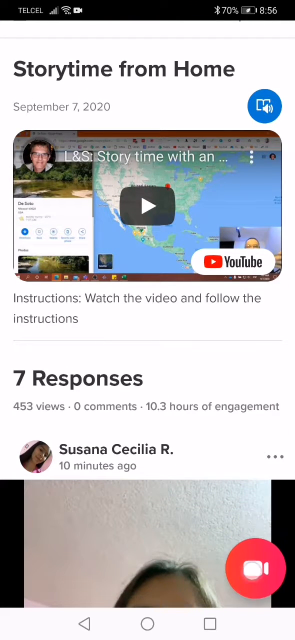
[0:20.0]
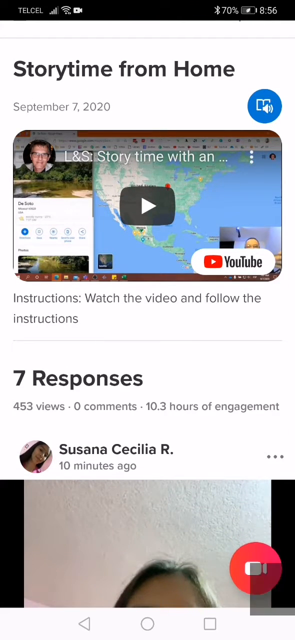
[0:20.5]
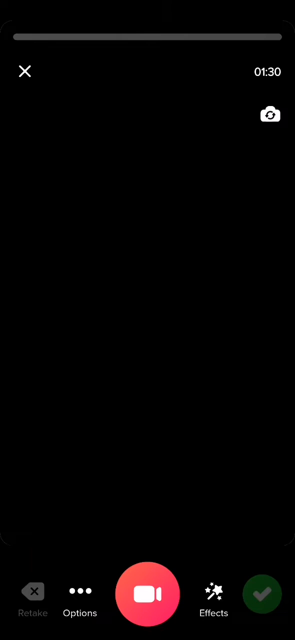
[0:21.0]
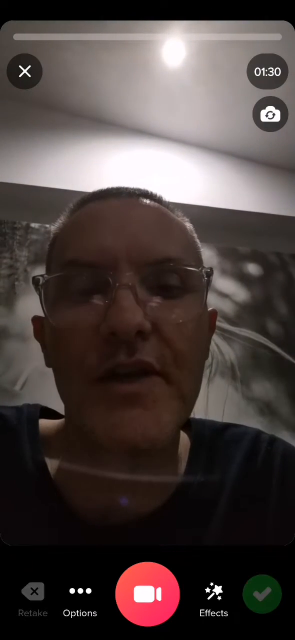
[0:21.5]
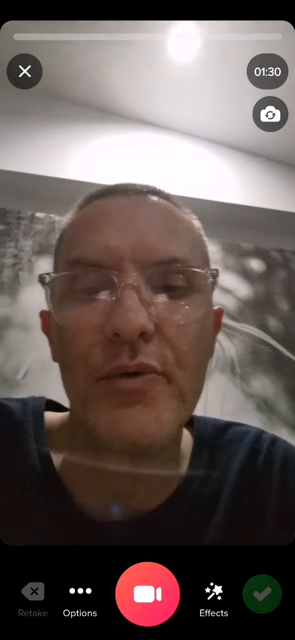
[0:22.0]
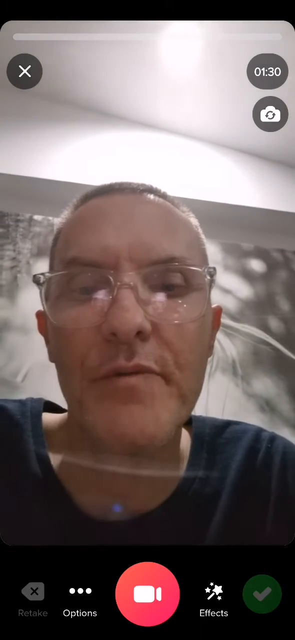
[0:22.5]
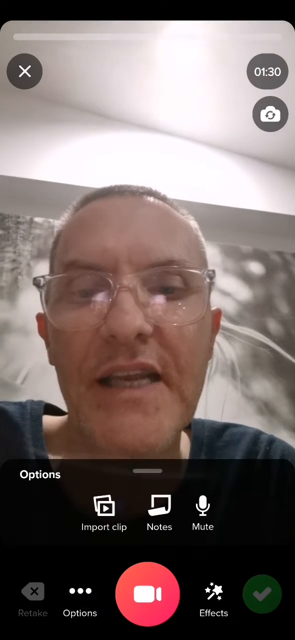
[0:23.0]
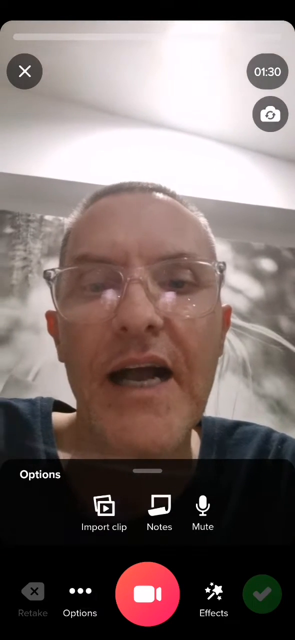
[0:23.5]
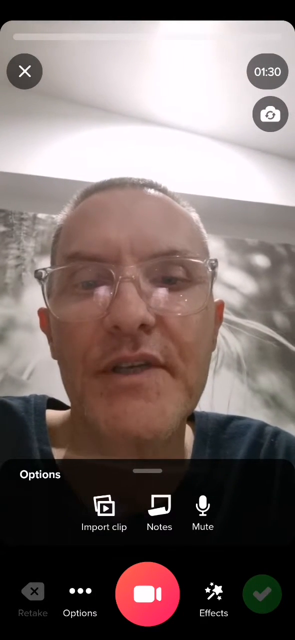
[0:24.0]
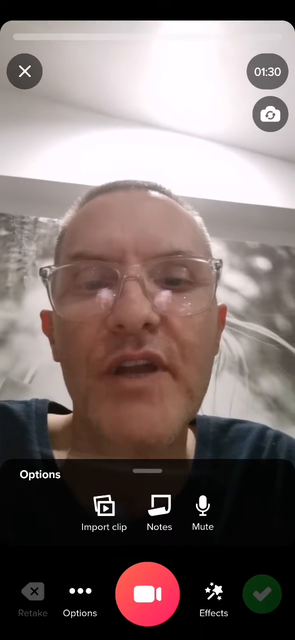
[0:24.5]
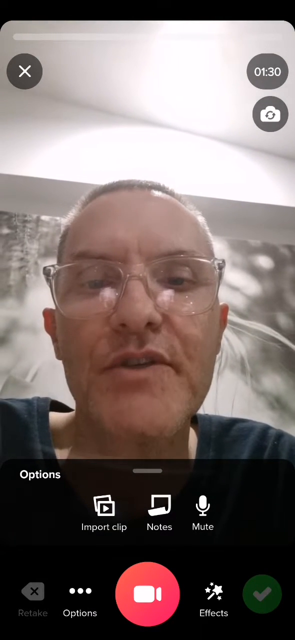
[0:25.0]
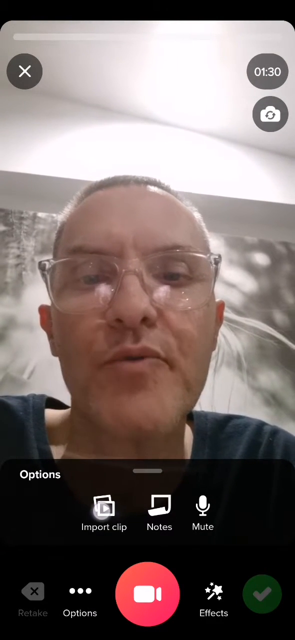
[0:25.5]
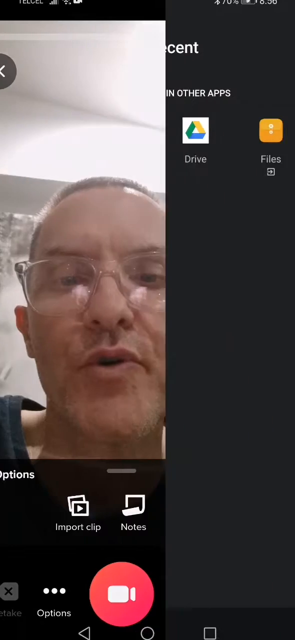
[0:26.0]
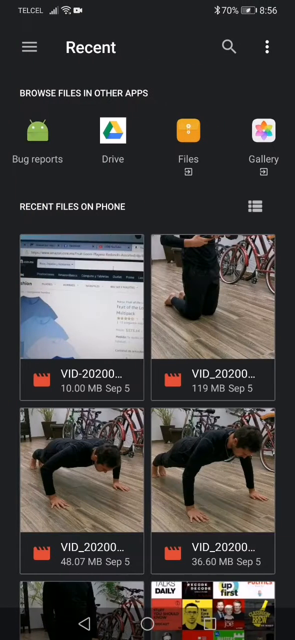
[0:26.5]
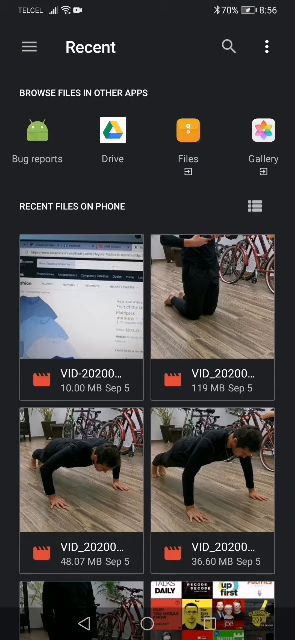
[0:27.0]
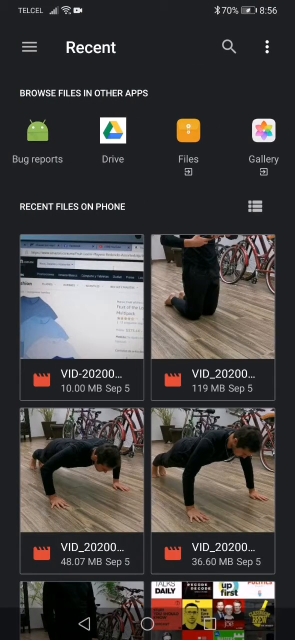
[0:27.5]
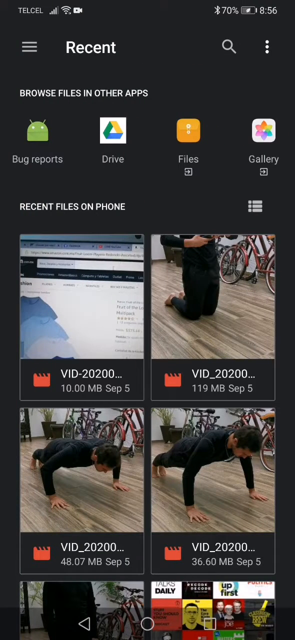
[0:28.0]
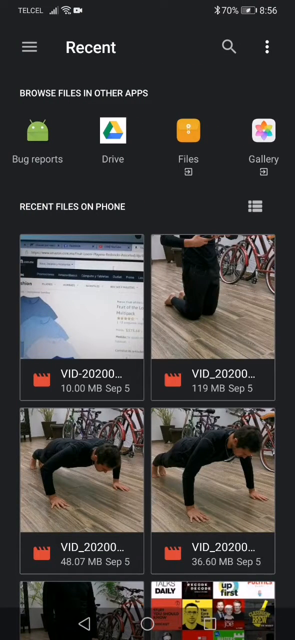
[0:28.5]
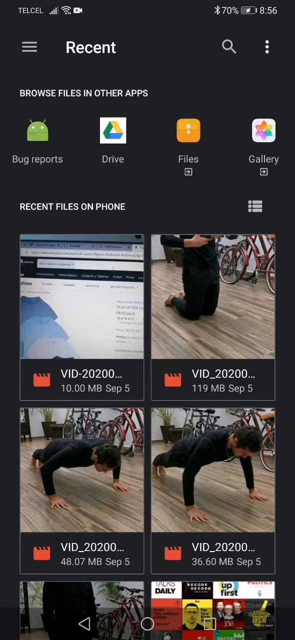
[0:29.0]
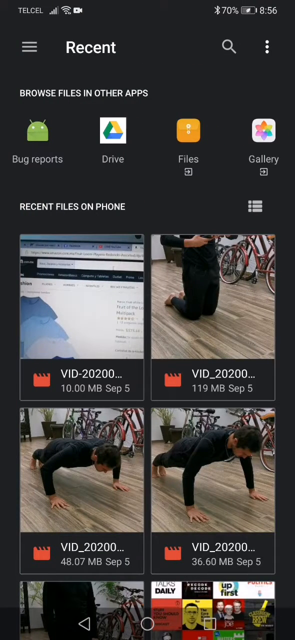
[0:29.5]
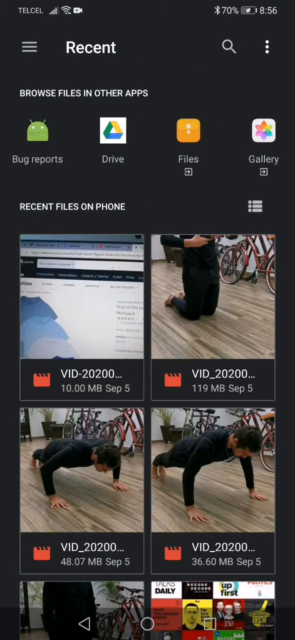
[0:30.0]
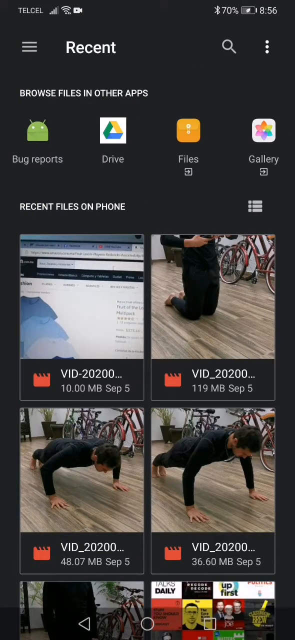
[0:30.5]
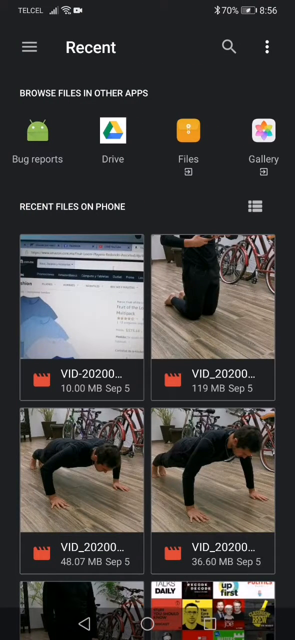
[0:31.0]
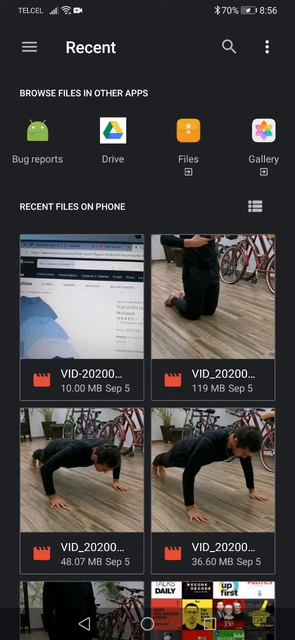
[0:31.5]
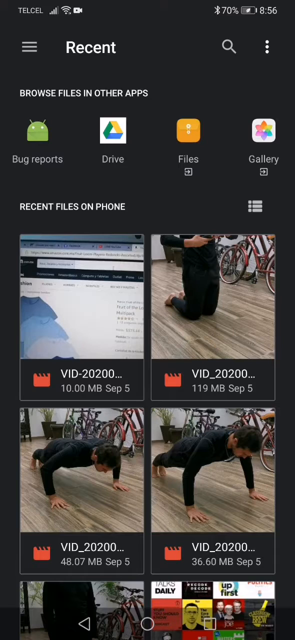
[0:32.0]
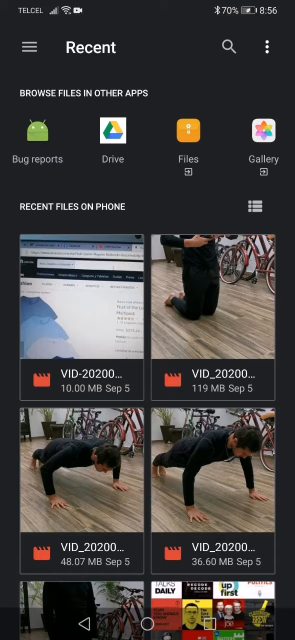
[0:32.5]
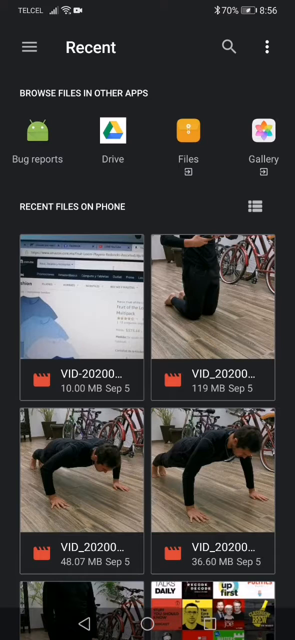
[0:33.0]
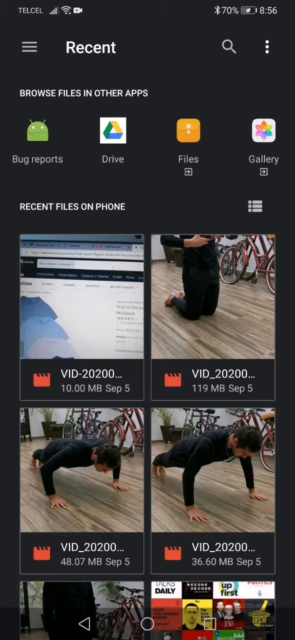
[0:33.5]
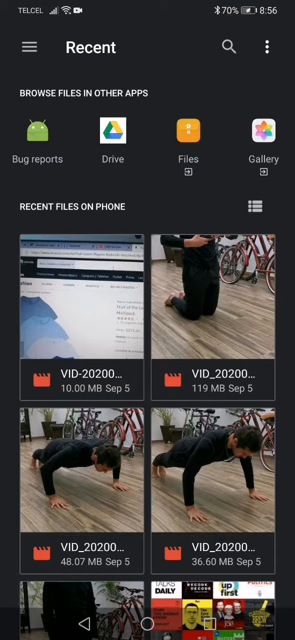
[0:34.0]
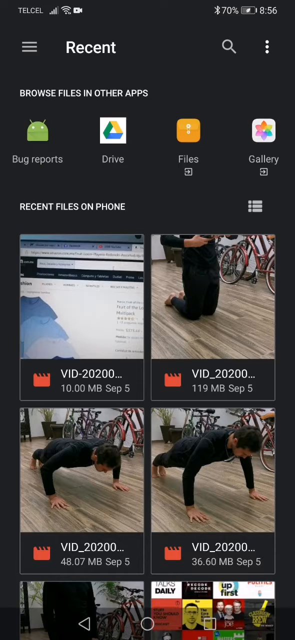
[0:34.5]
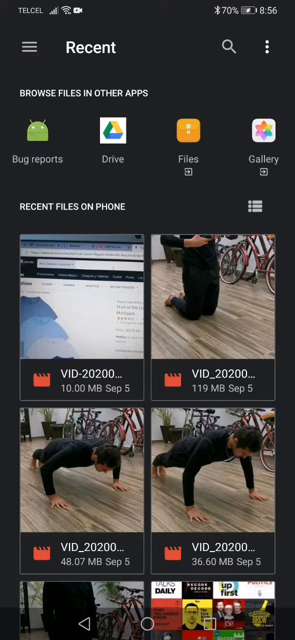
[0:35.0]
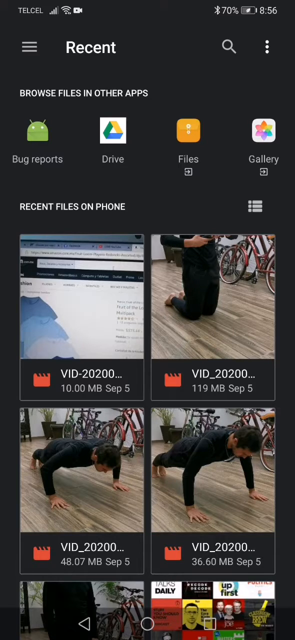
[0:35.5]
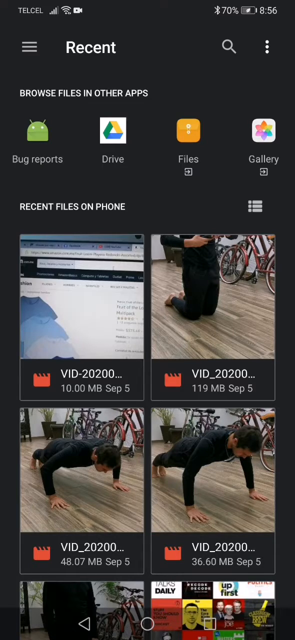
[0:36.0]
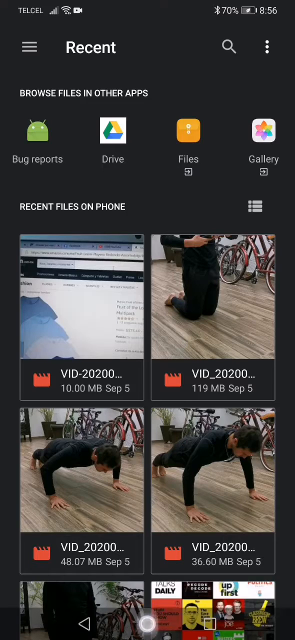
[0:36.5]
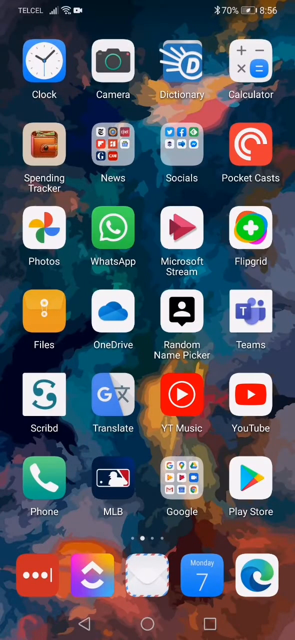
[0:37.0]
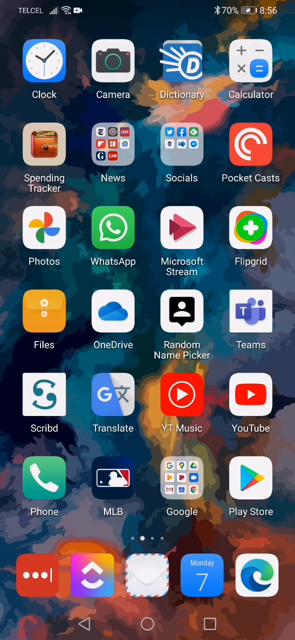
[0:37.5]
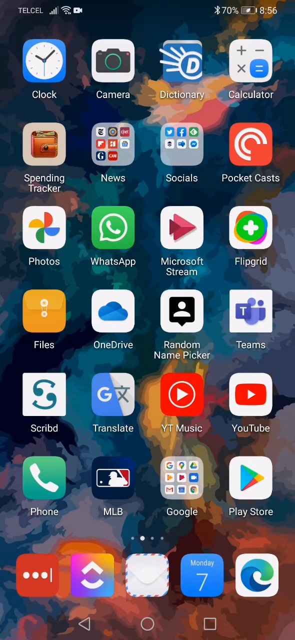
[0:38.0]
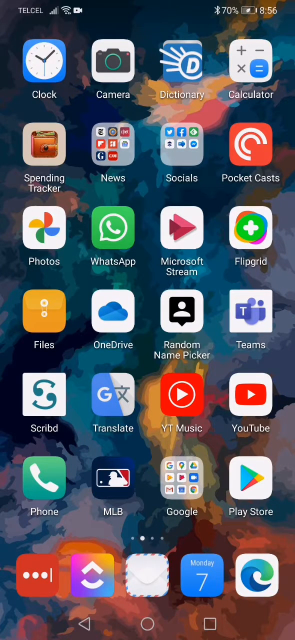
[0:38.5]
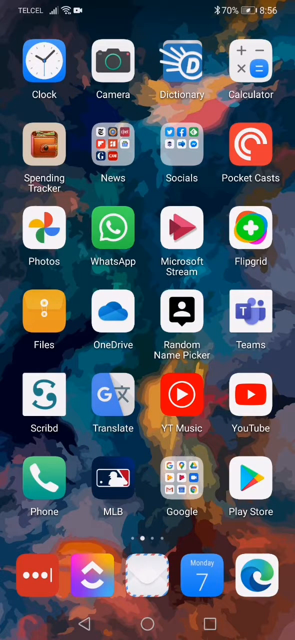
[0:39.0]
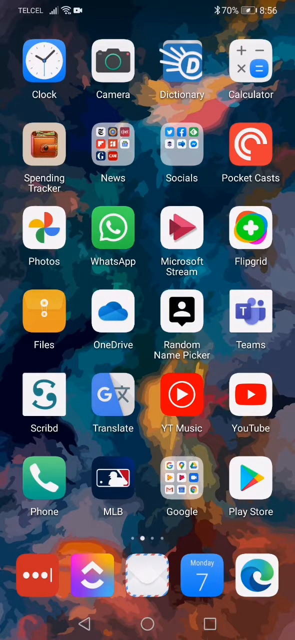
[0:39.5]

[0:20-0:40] From the Flipgrid files the screen goes to home videos, showing recent files that were viewed, which look like workout videos. A man appears to be giving instructions to men who are working out. A young man, maybe in his early 20s, gets ready to do push-ups and is in the push-up position. The date shown is the 5th of September, 2025. The person looks like a content creator.